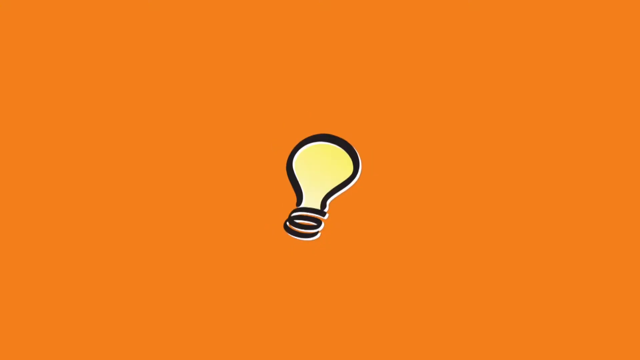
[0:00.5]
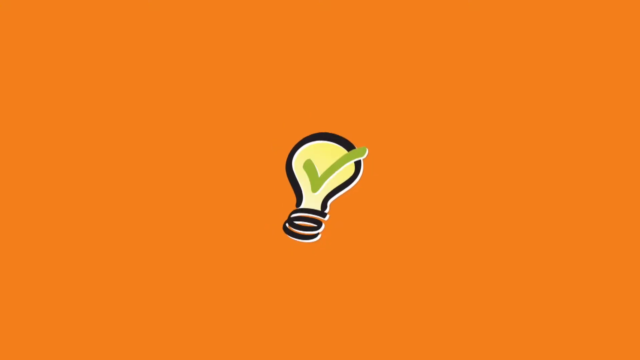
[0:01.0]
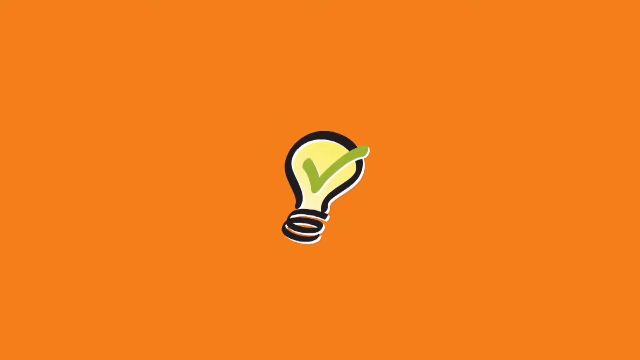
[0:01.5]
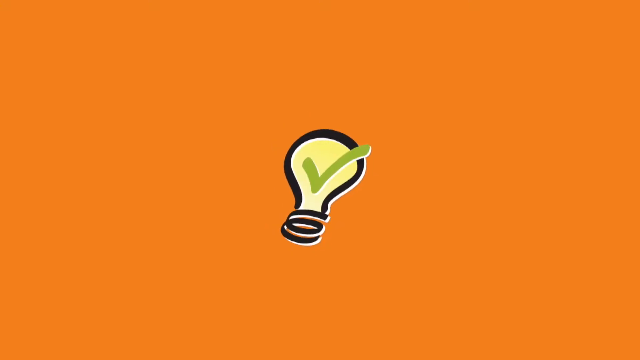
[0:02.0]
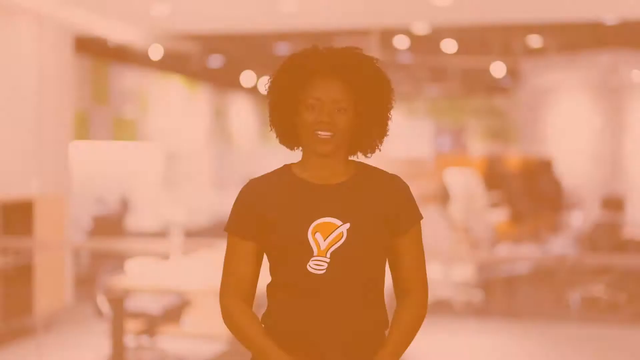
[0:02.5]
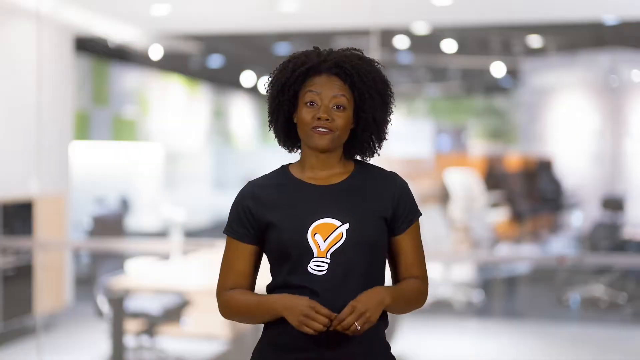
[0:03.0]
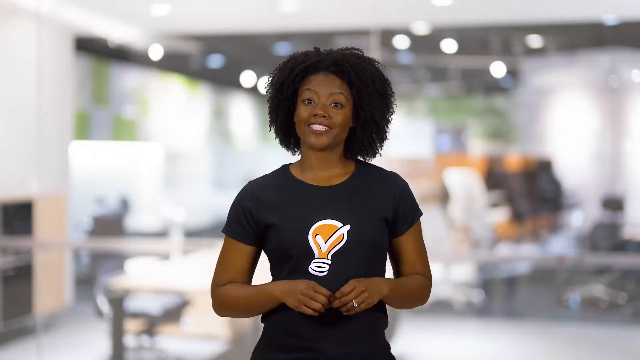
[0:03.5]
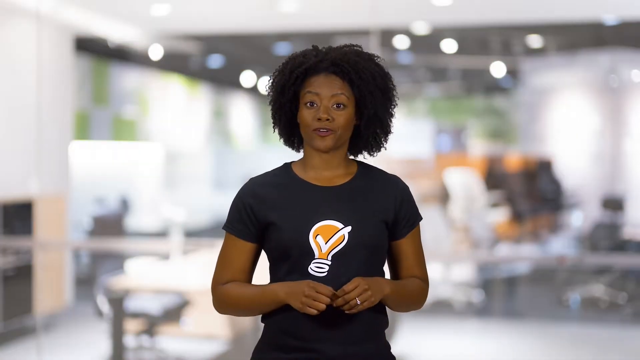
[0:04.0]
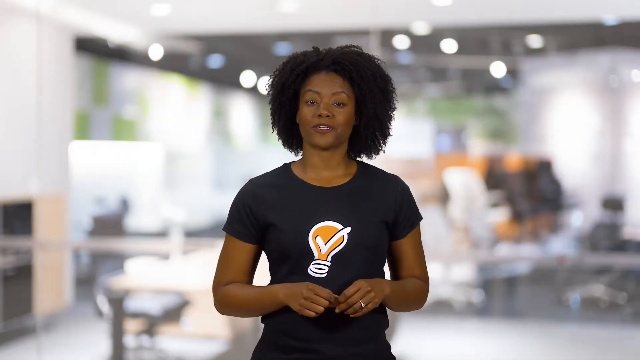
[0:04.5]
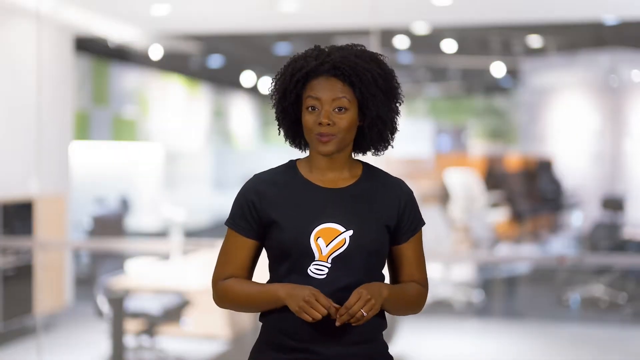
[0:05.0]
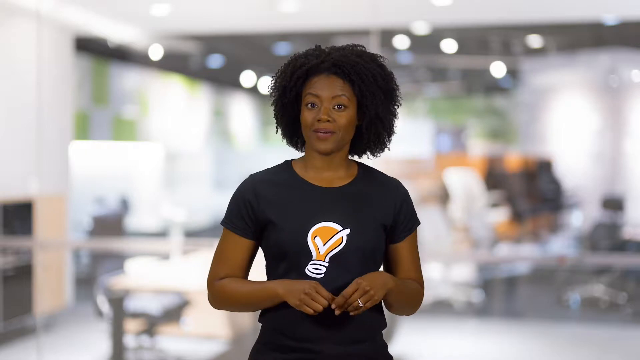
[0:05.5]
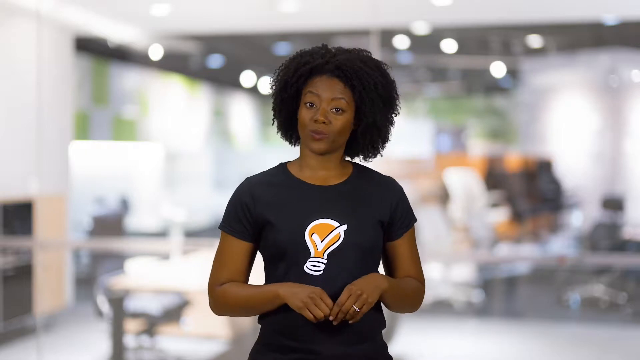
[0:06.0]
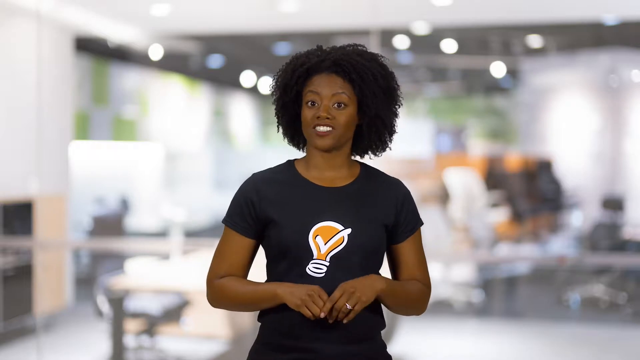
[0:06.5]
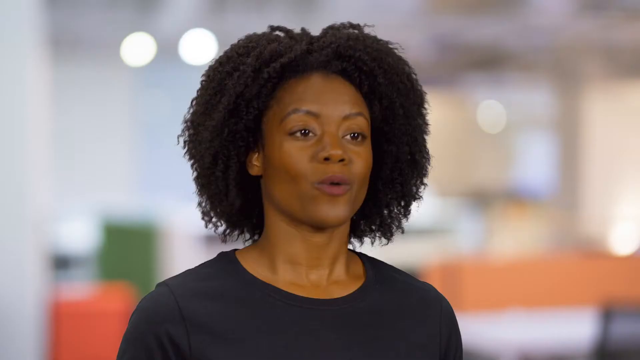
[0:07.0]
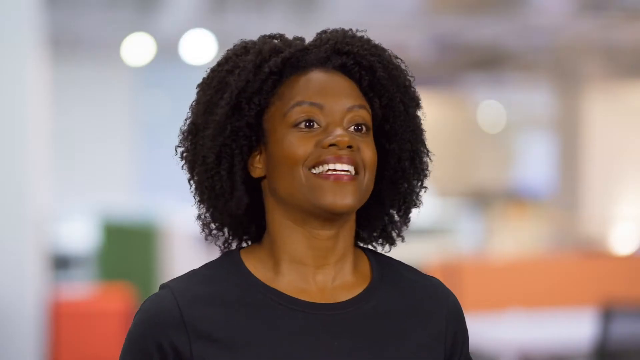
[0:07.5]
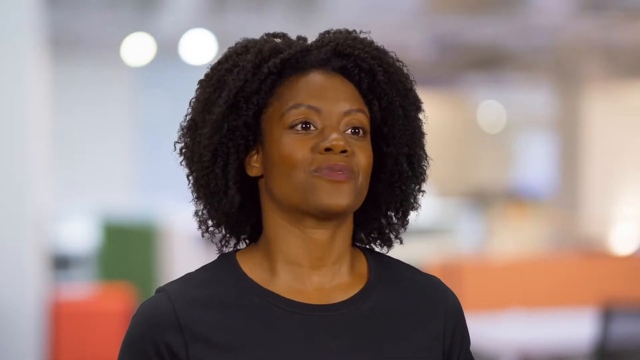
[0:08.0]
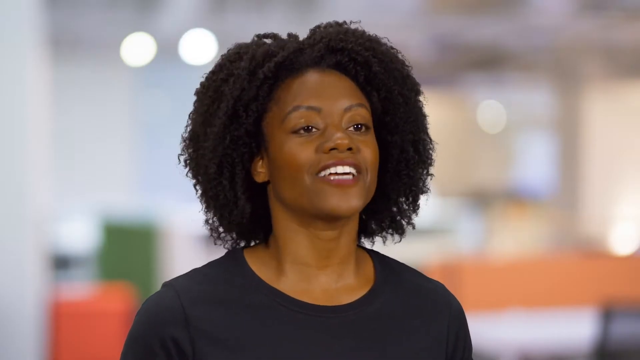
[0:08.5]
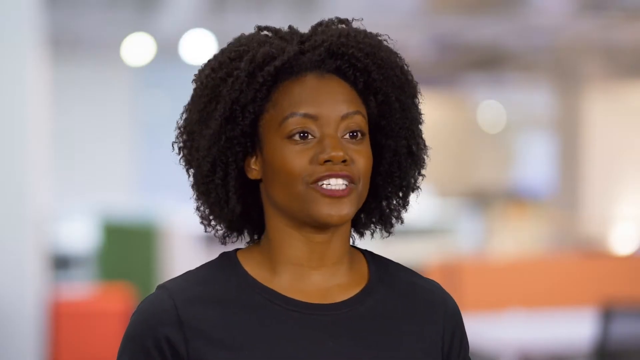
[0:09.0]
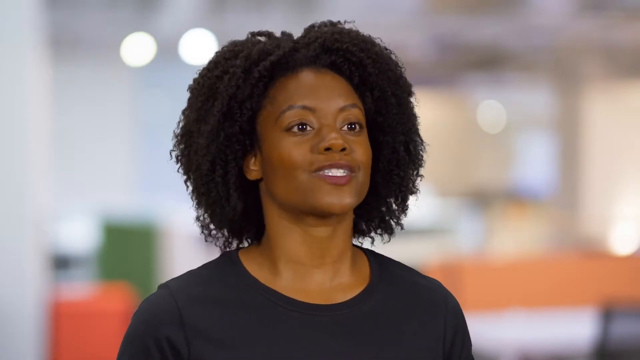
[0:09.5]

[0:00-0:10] The video opens on a black screen before transitioning to a bright orange screen with a small lightbulb animation on it. A green checkmark comes onto the lightbulb, and then the video fades in to show a dark-skinned Black woman with long curly hair hanging just above her shoulders. She wears a black short-sleeved t-shirt with the same type of lightbulb logo in the middle of her chest. Talking directly to the camera, she lifts her hands from her waist up to her midriff and puts both hands together, using her fingers to touch the opposite hand while talking steadily to the camera in an excited fashion.